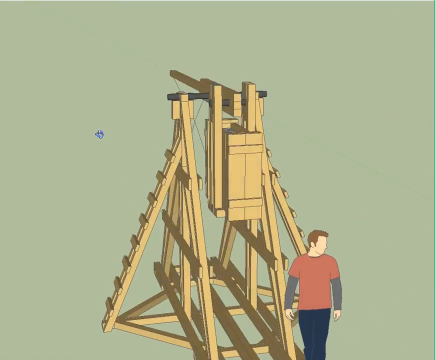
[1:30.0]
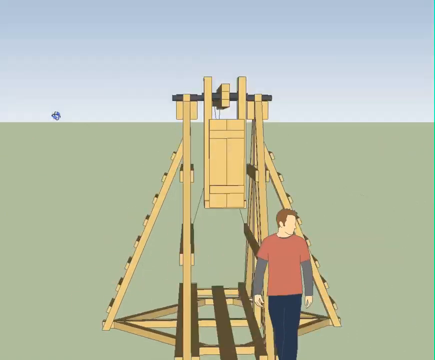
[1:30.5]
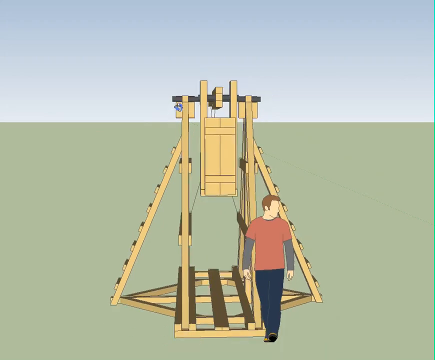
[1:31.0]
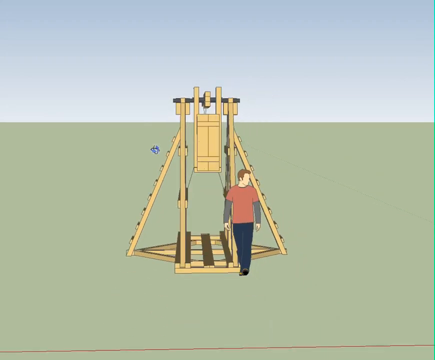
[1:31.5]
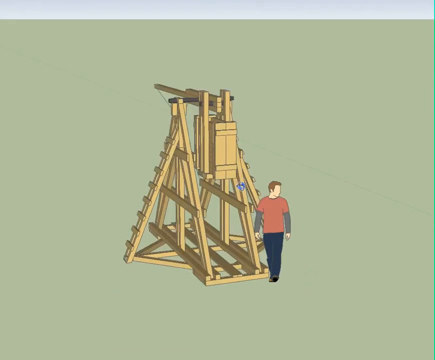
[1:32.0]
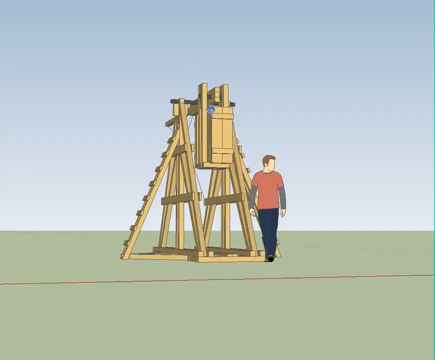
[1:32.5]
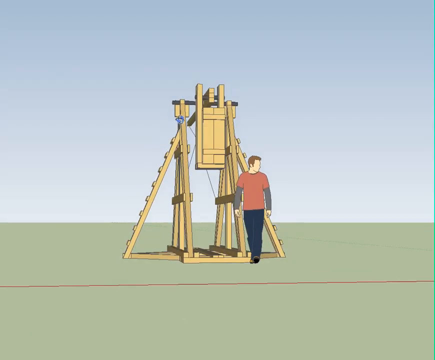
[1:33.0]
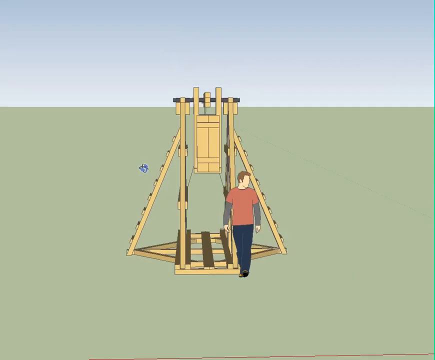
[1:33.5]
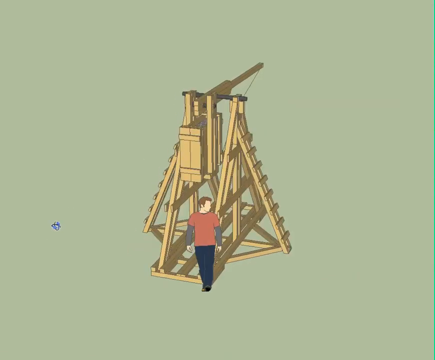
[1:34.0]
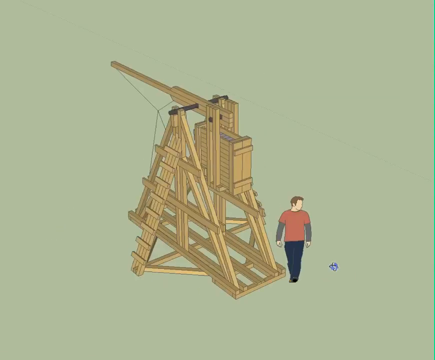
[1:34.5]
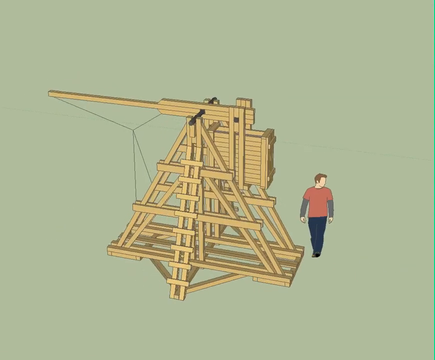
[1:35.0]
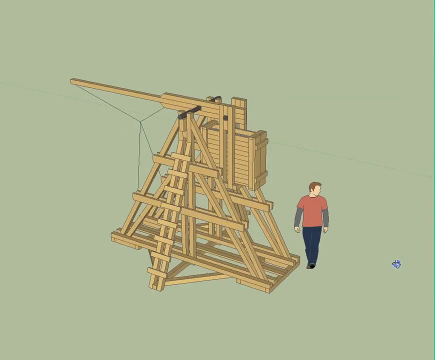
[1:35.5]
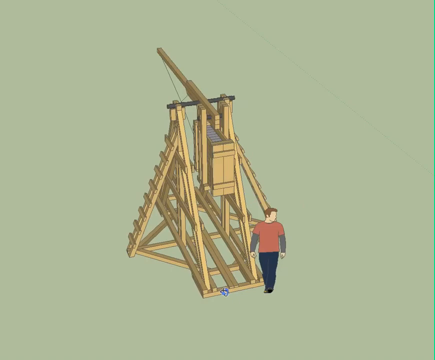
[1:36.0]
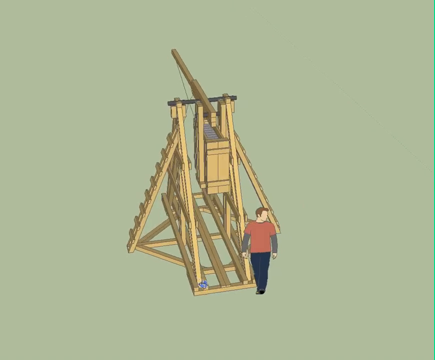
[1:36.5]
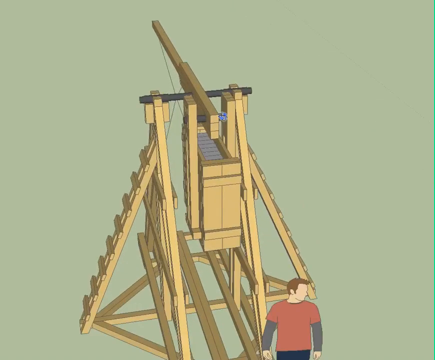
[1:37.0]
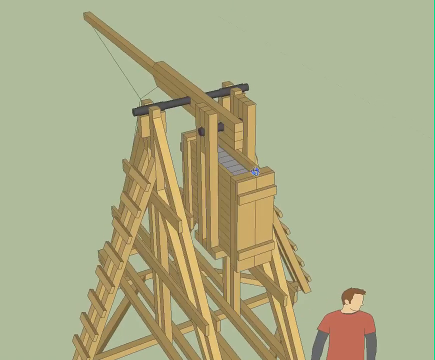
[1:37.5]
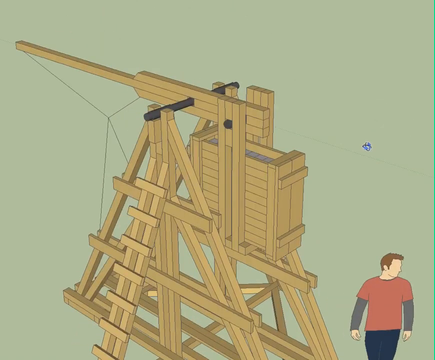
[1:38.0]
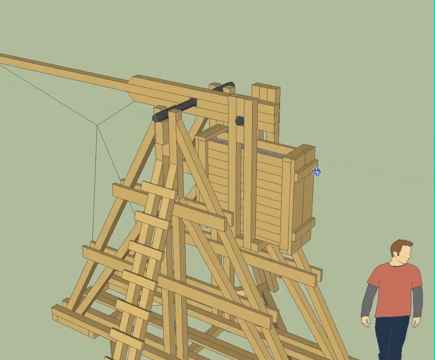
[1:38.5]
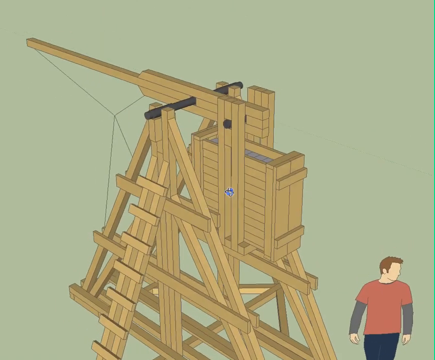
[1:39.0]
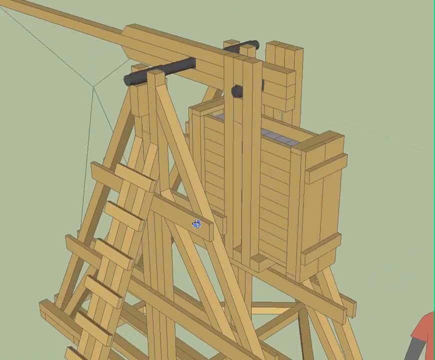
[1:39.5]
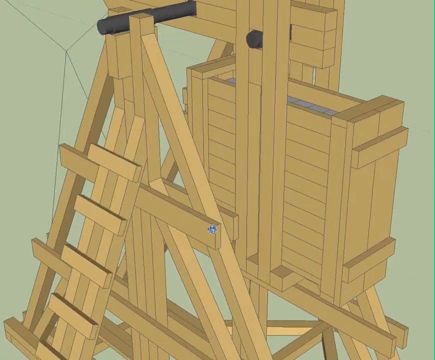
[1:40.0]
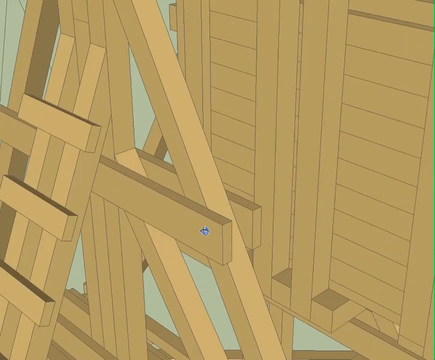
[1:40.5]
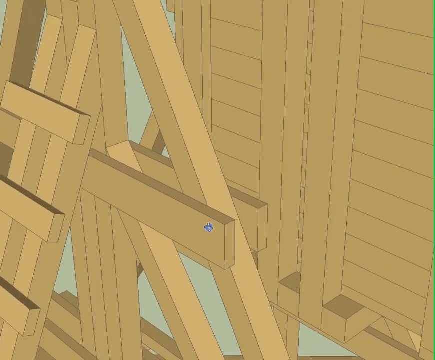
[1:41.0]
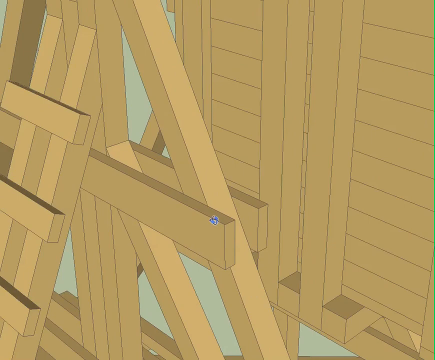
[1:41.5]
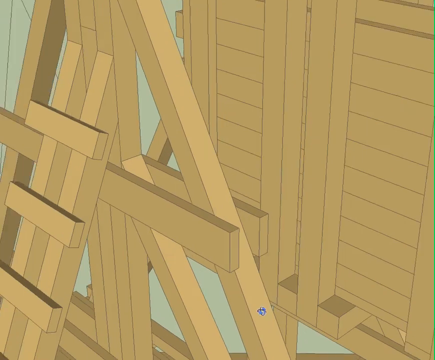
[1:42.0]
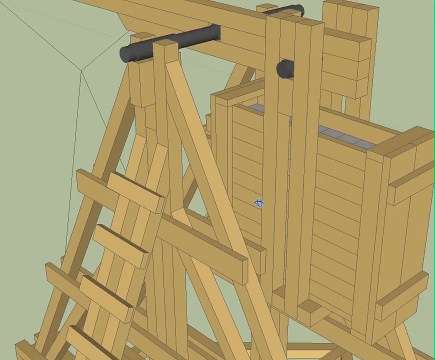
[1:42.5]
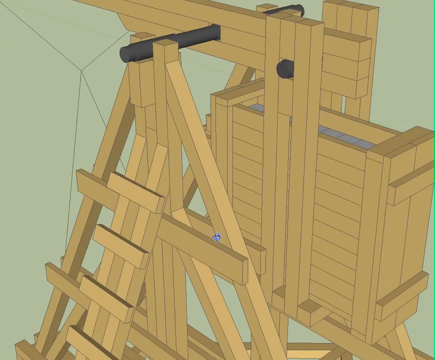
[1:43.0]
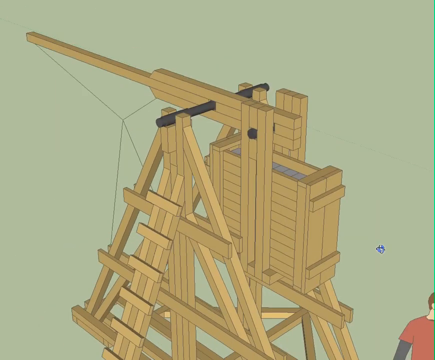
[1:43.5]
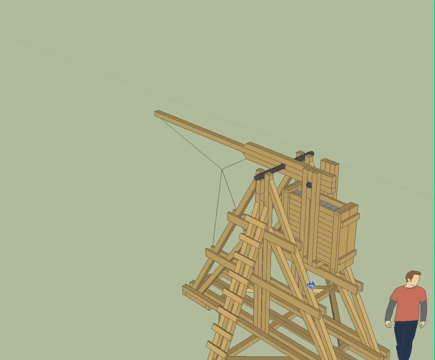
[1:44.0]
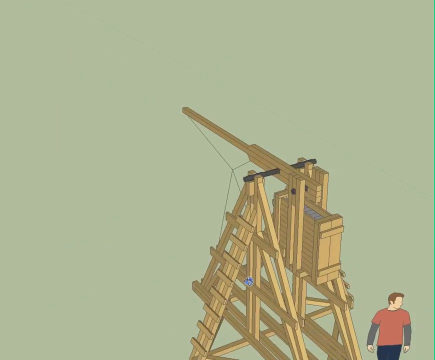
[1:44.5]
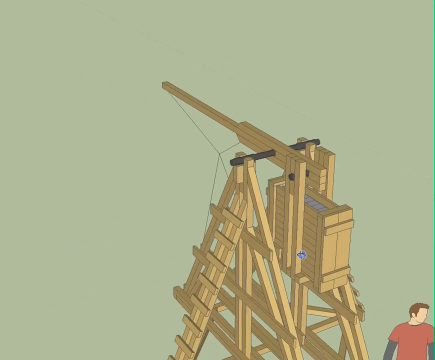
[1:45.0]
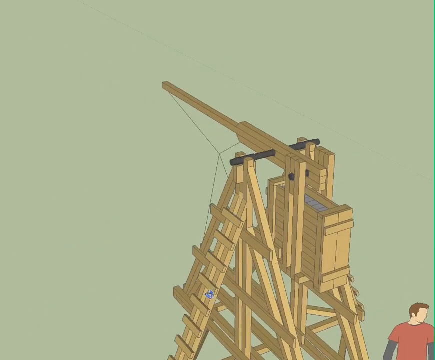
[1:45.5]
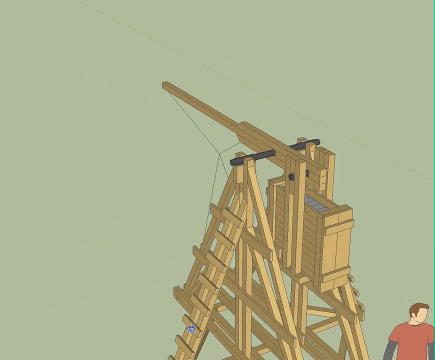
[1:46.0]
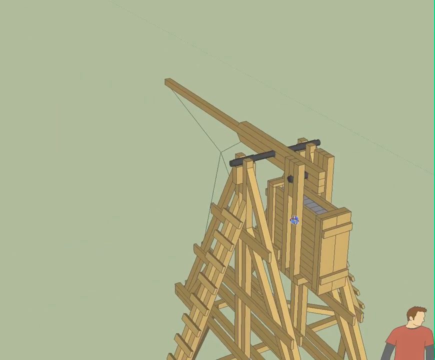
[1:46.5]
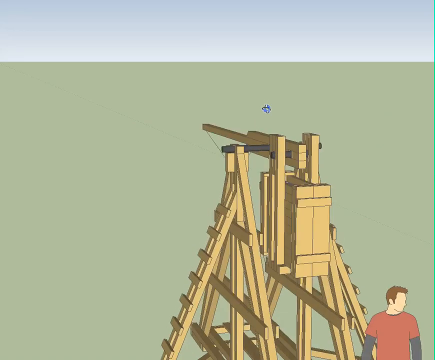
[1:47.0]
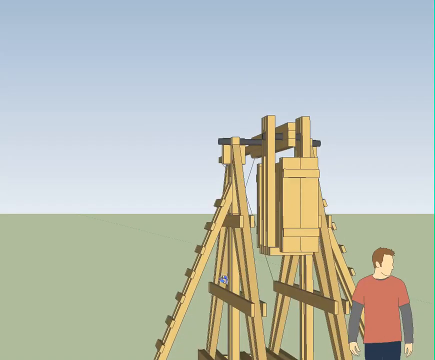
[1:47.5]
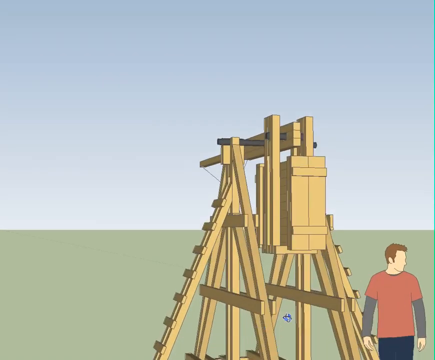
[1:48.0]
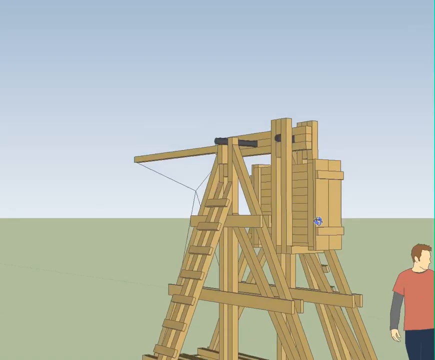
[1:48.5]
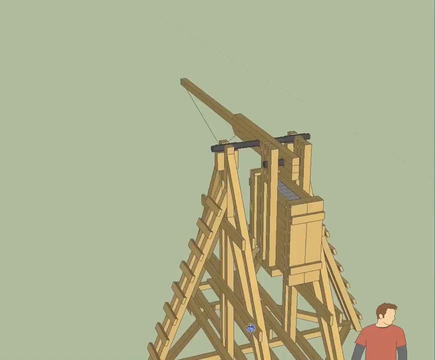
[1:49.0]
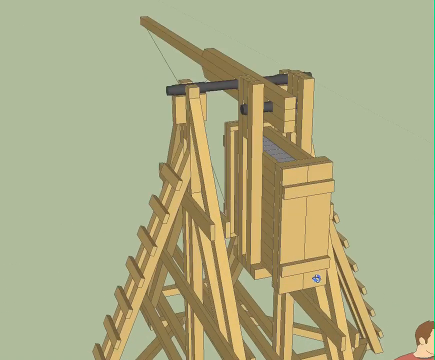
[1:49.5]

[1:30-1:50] The little contraption keeps being turned around in a circle, turned onto one side with an area highlighted, then to another side with that area highlighted; it never settles on one spot and seems to be checking. It is turned to face away and touched with a green or blue cursor. The view goes down, up, back down, gets very close, then very far away, showing a back angle. The structure is tipped over to show its back side, then it stops, turns around and comes back up.